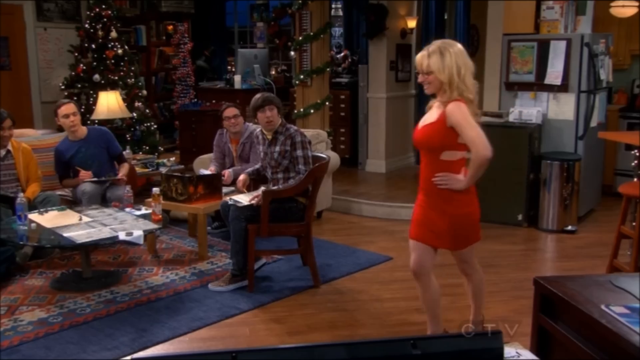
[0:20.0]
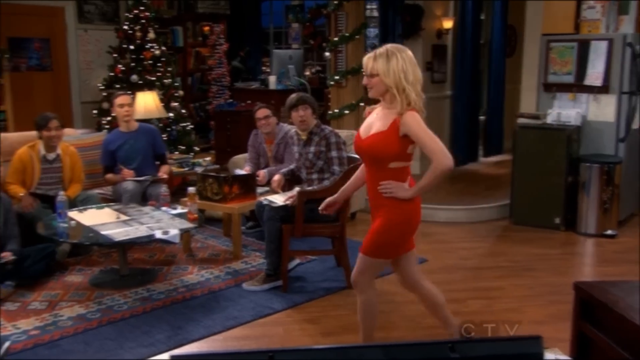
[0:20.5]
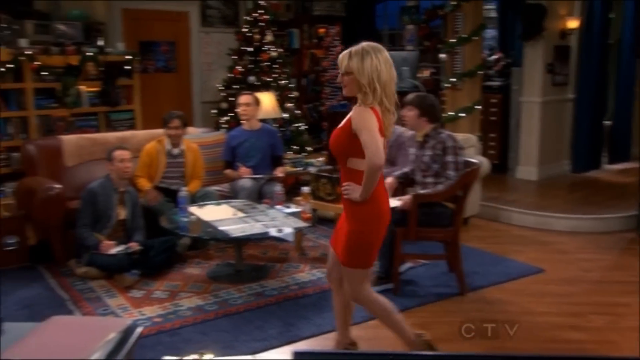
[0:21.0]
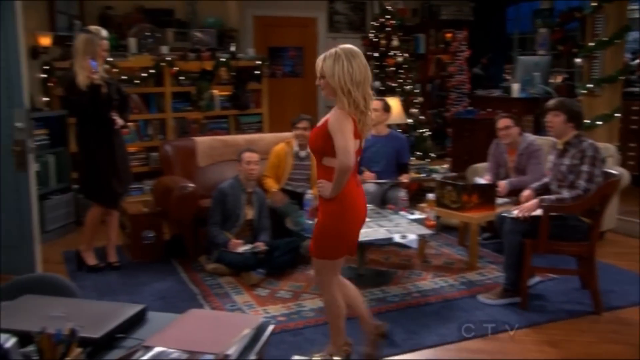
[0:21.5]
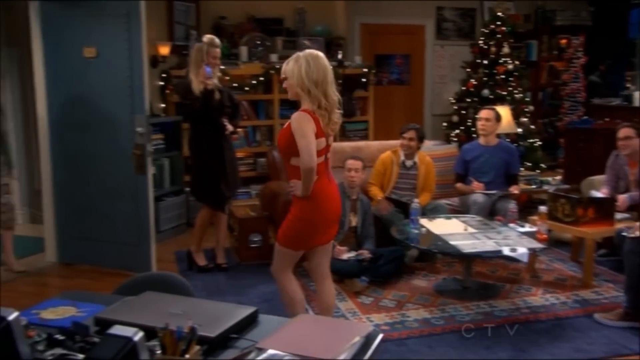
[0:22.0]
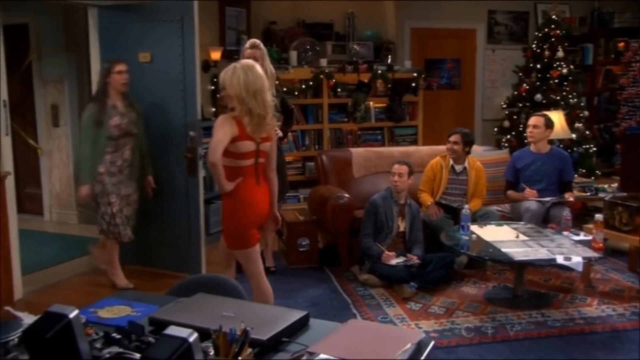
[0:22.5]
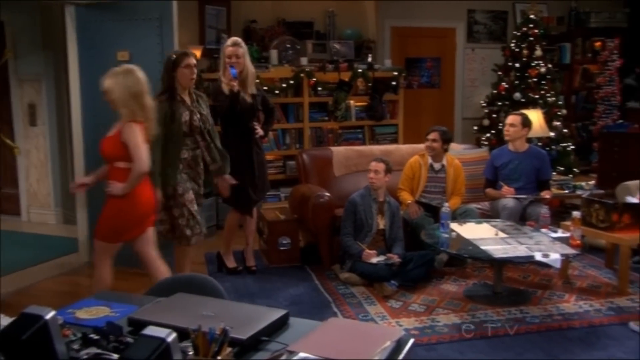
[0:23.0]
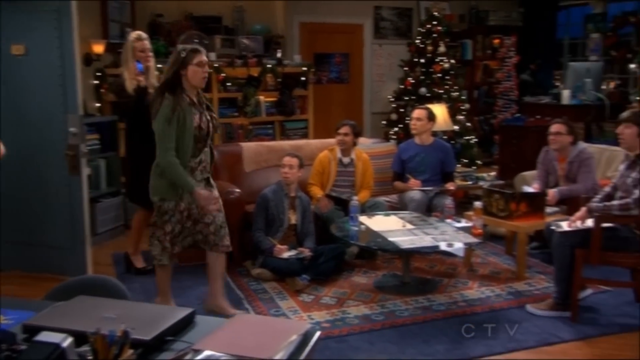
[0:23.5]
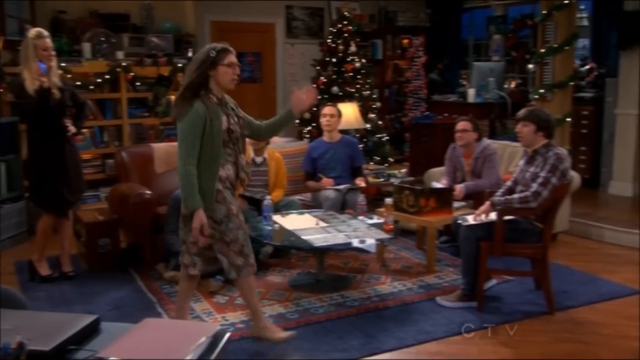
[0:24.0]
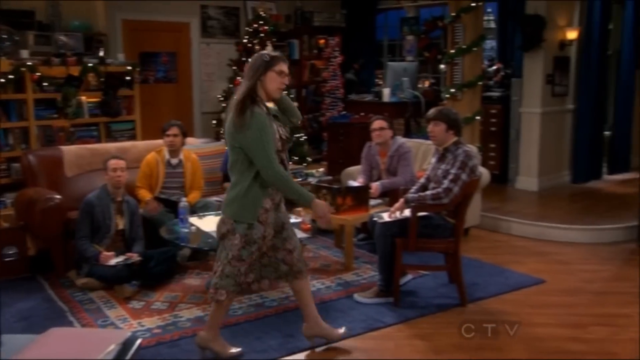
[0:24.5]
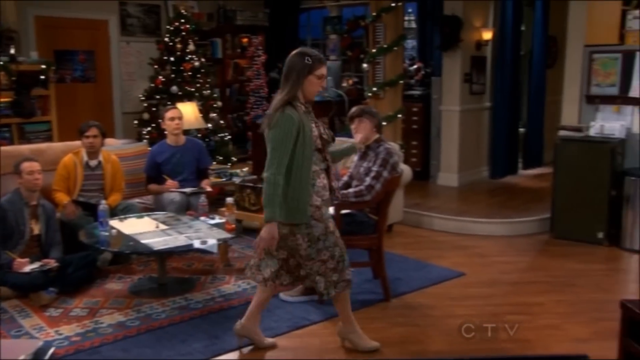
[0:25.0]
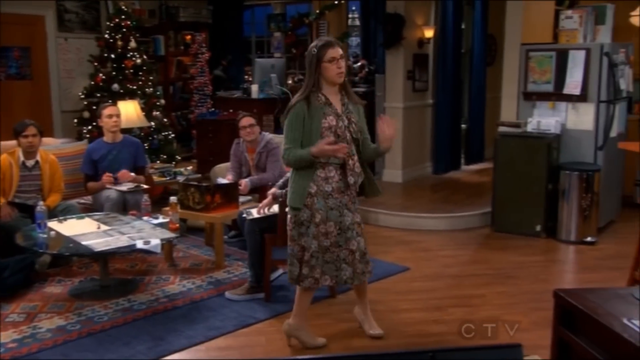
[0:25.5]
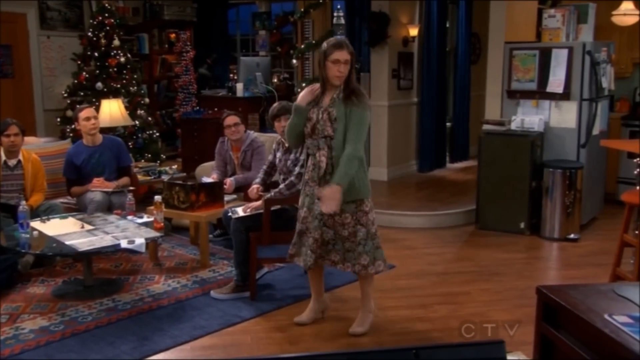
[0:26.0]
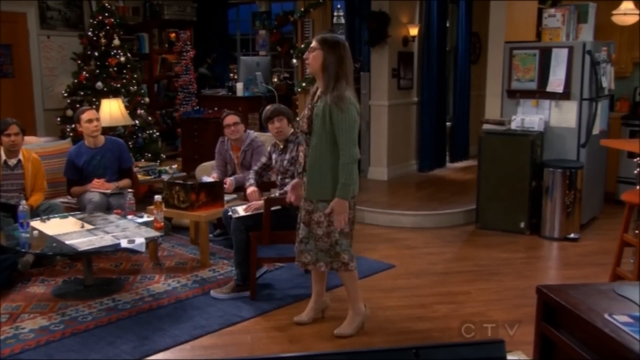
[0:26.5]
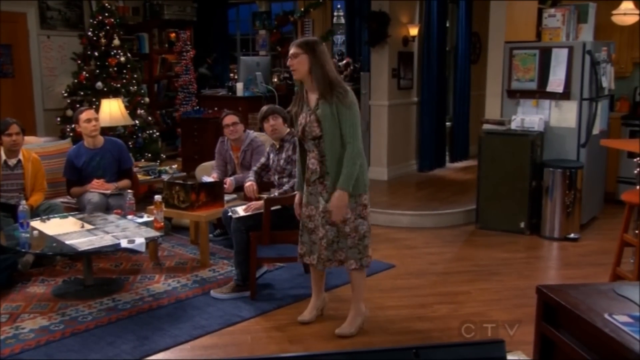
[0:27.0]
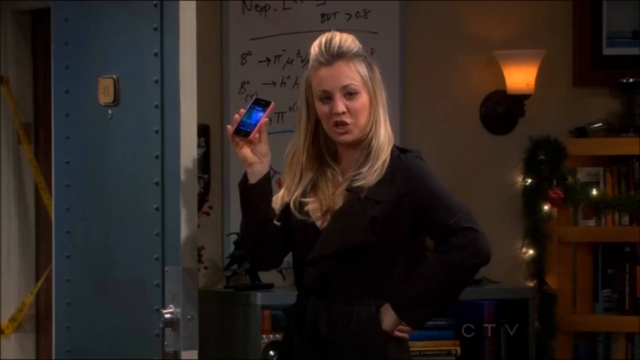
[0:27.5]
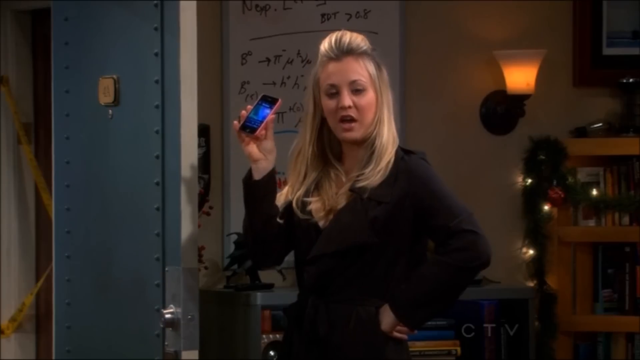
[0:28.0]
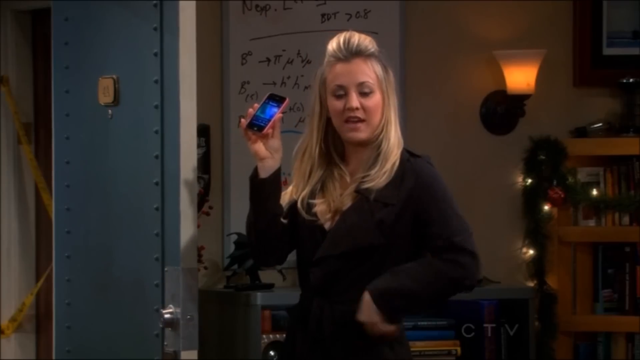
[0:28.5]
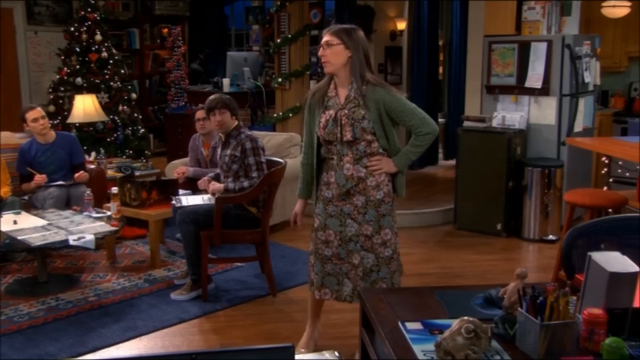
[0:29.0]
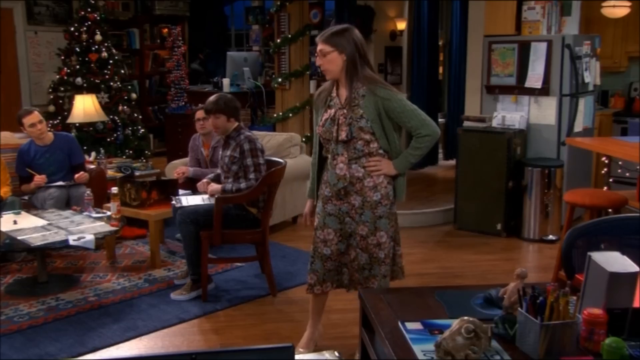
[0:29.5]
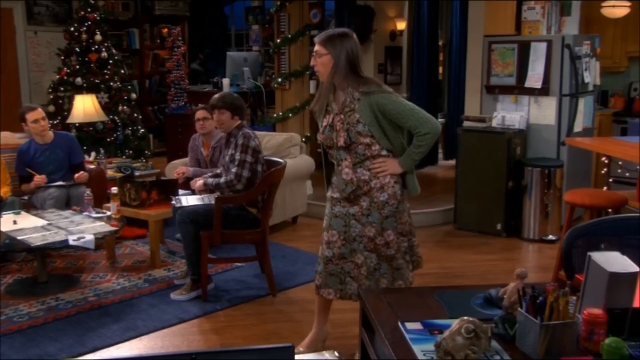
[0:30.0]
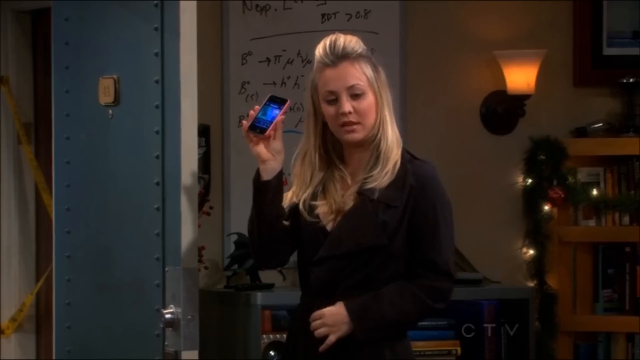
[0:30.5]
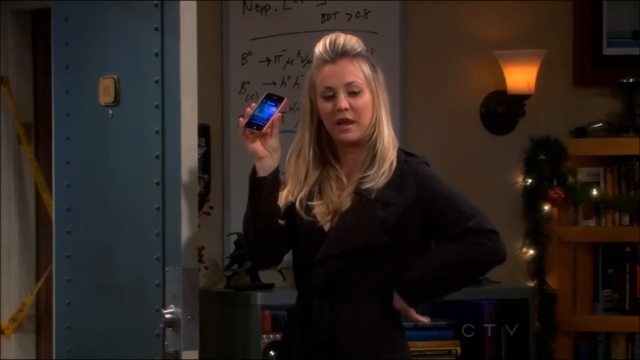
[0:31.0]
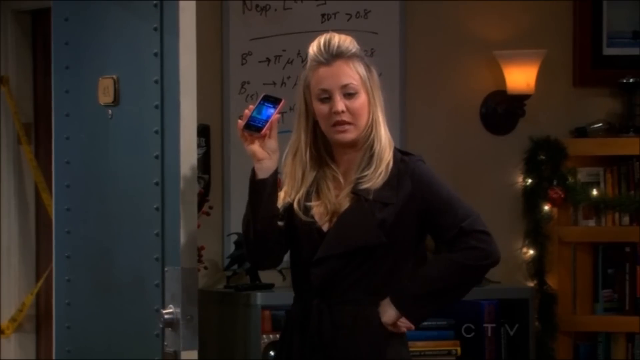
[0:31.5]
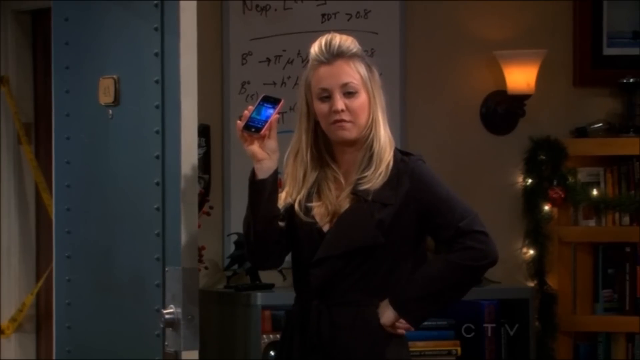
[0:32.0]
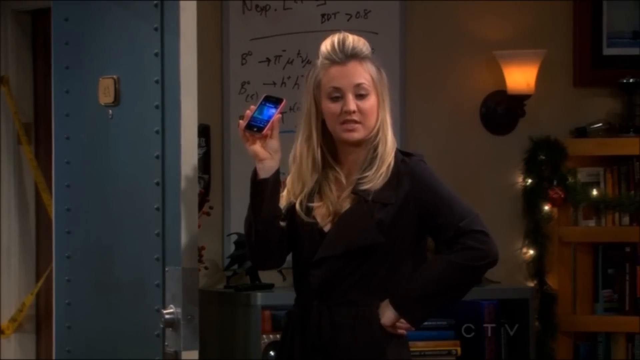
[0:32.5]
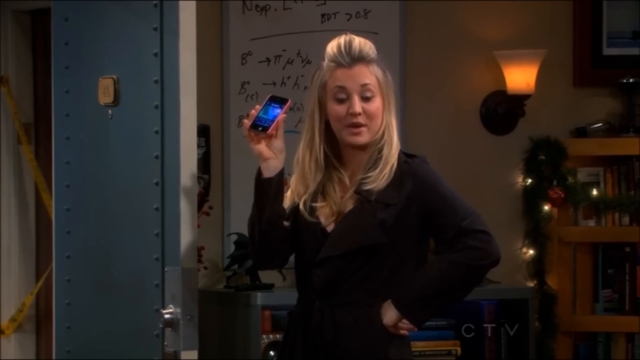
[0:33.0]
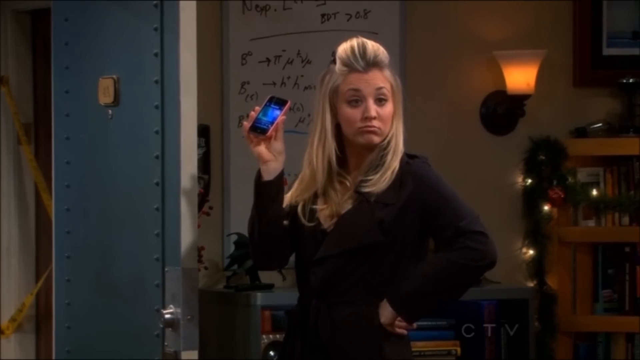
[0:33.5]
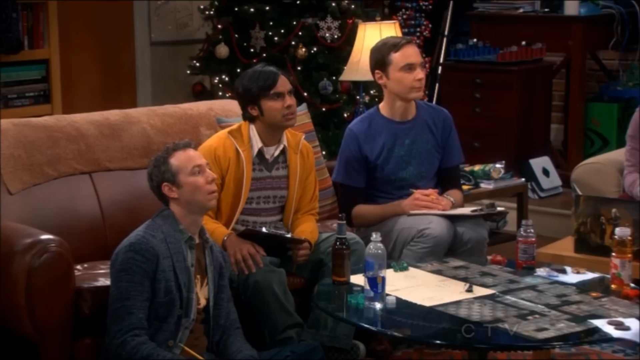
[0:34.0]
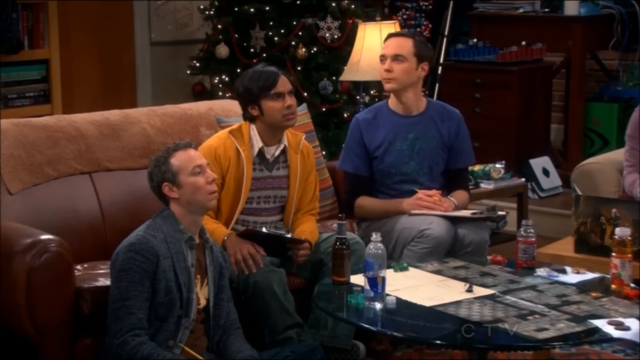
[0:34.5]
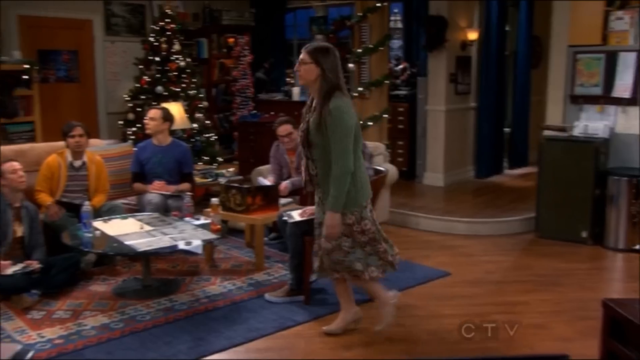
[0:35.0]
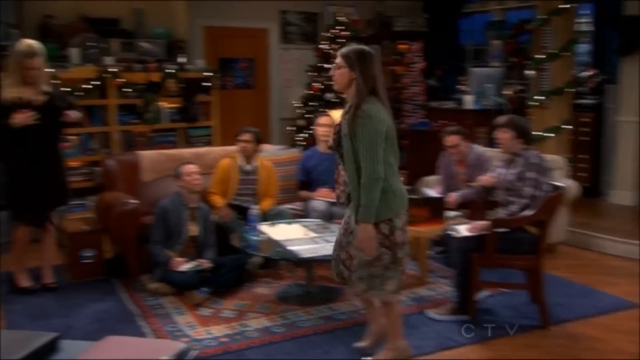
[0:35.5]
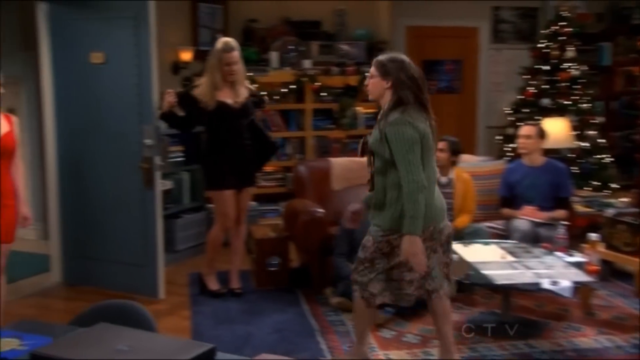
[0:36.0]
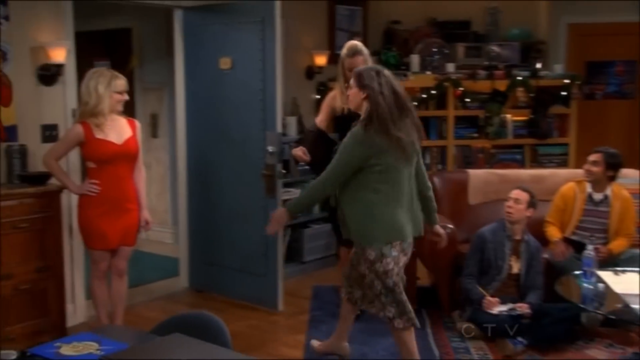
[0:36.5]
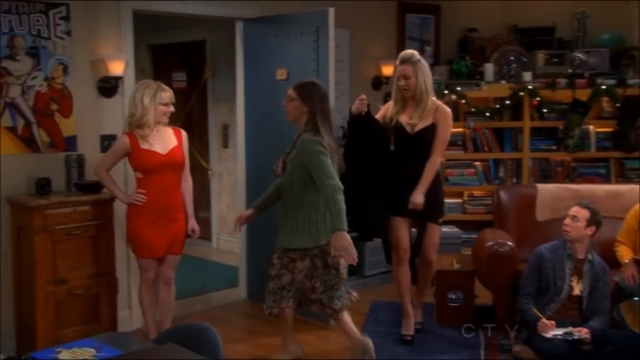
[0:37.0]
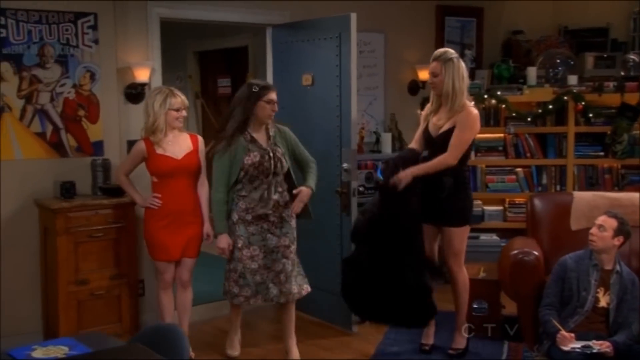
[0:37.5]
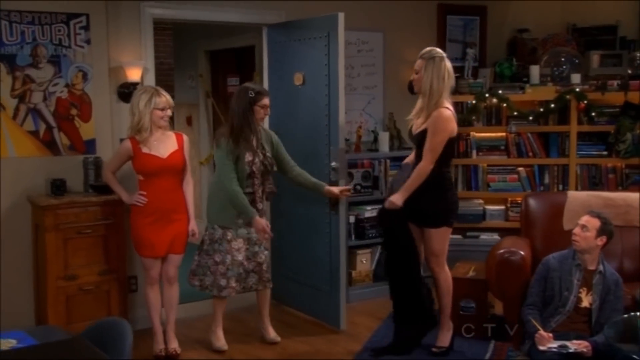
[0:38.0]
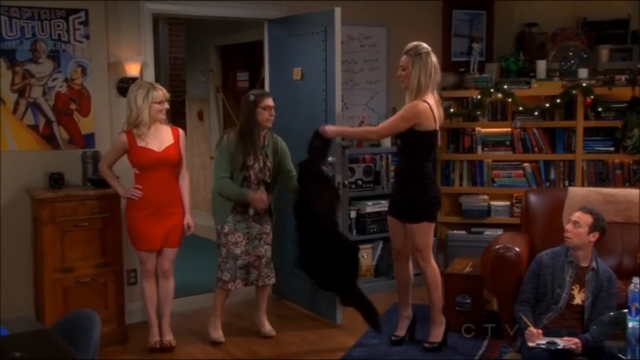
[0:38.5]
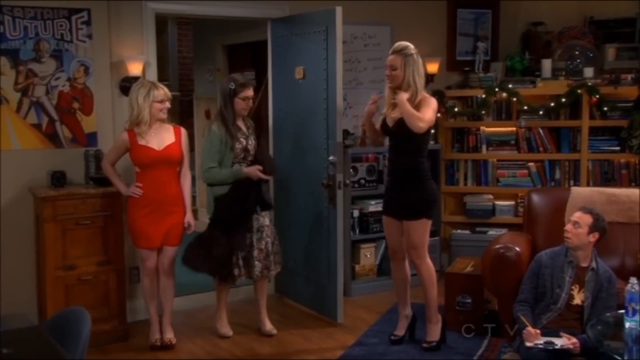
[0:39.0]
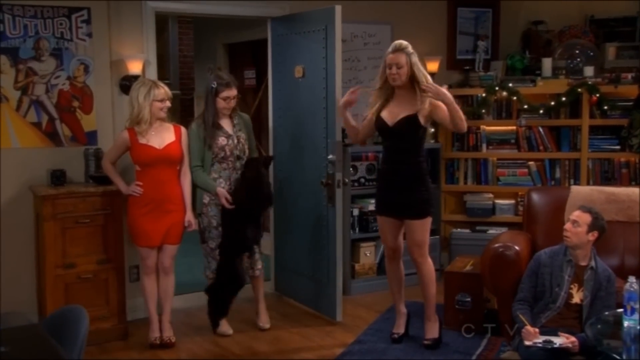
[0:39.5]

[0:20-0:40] The woman in the red dress spins around as she walks towards the left of the screen; parquet floors are visible on the floor. Three men sit near the couch: two on the couch and one on the floor. The man in the middle wears an orange long-sleeved top. To the woman's left is a man with hair that looks like one of the Beatles', wearing a checkered shirt, and another man sits in the chair wearing a purple hoodie. The woman walks out of the room, and another woman walks in through the doorway wearing a green cardigan and a flowery dress. She brushes her hair back with her left hand, walks towards the kitchen and spins round, and the men all turn to stare at her. The shot cuts back to the blonde woman holding her phone and talking to the woman in the green cardigan, who looks around. The camera pans back to the blonde woman, then to the three men on the couch, then to the woman in the green cardigan, who walks towards the door, where the woman in the red dress stands with her right hand on her hip. The woman in the green cardigan spins round and goes to take the blonde woman's coat, revealing that the blonde woman wears a very short, strappy black dress.